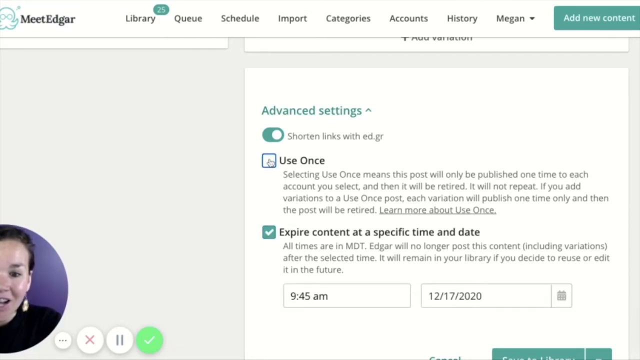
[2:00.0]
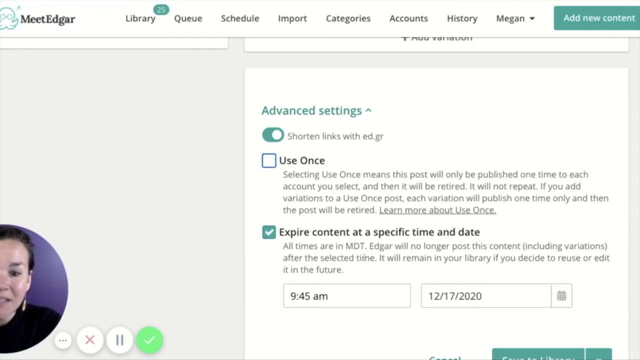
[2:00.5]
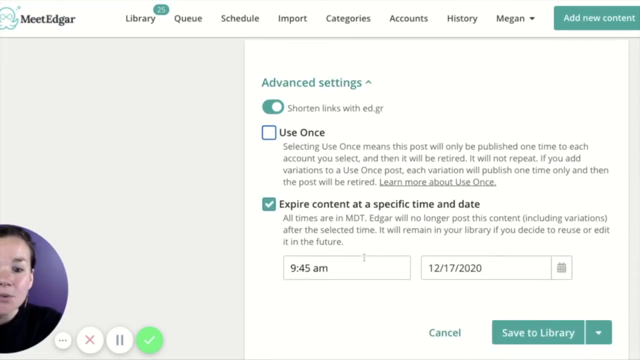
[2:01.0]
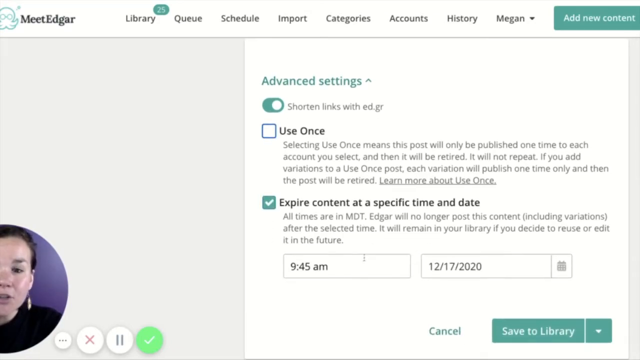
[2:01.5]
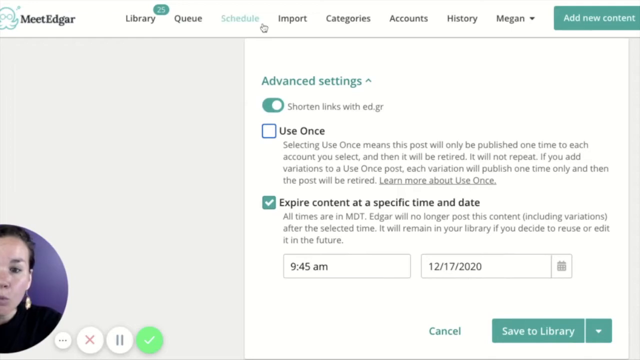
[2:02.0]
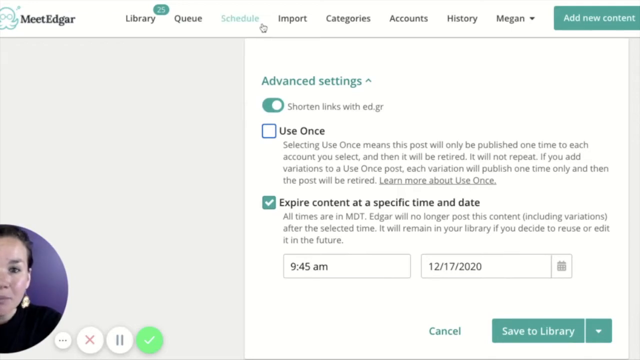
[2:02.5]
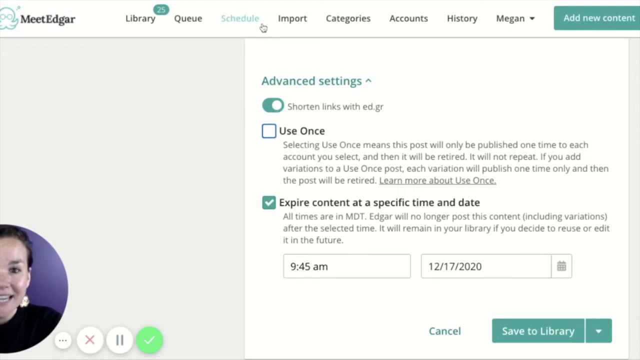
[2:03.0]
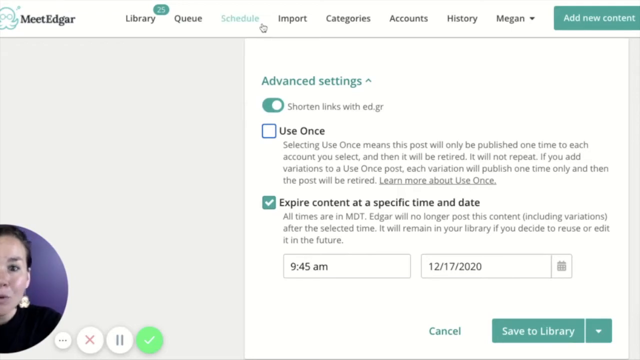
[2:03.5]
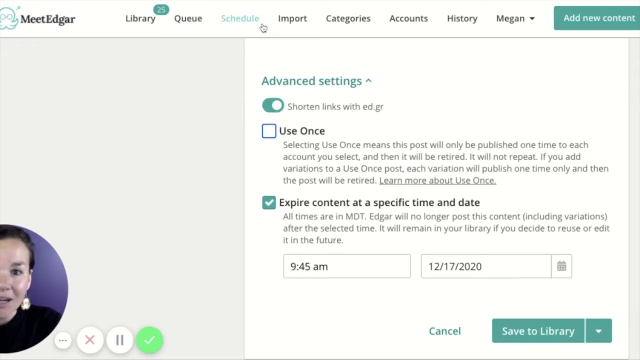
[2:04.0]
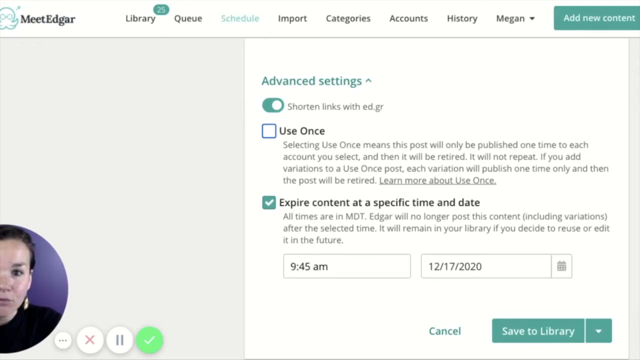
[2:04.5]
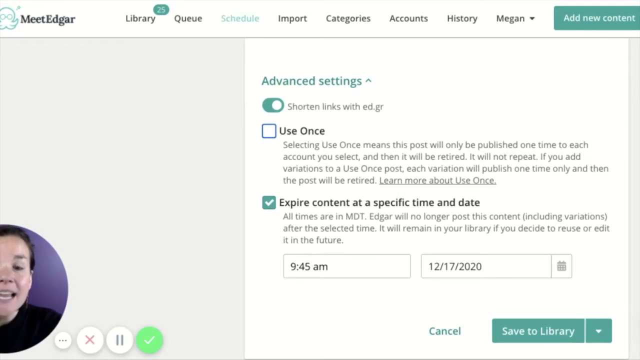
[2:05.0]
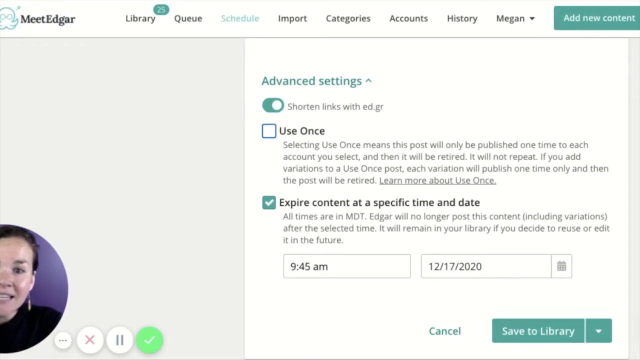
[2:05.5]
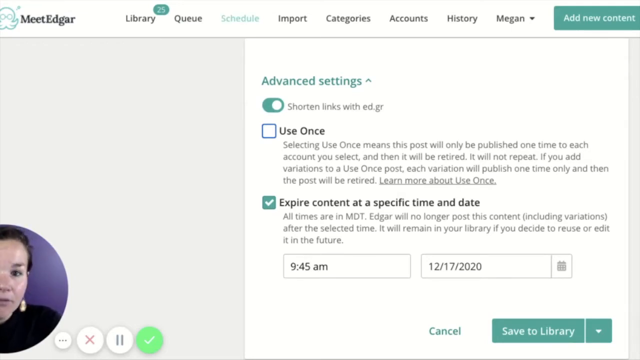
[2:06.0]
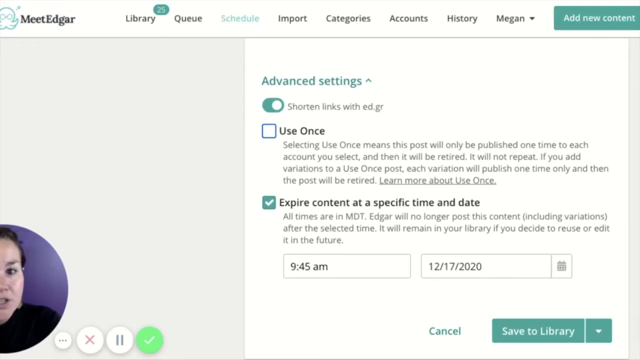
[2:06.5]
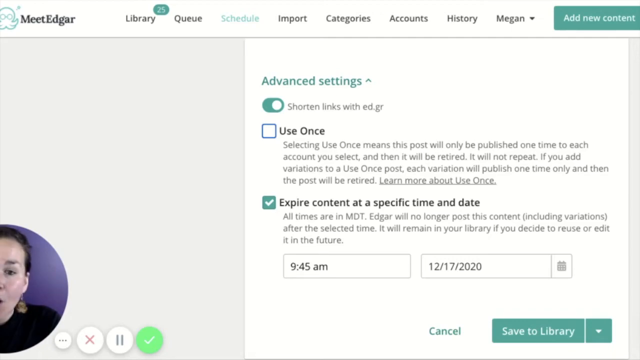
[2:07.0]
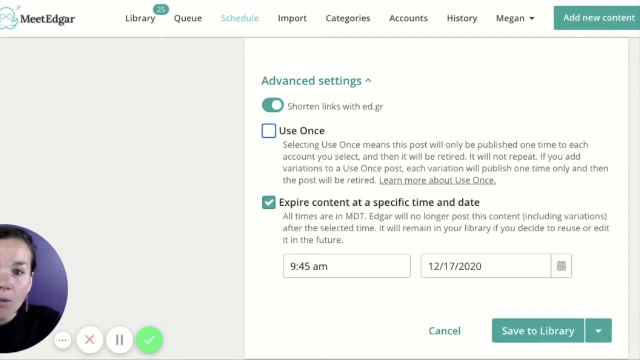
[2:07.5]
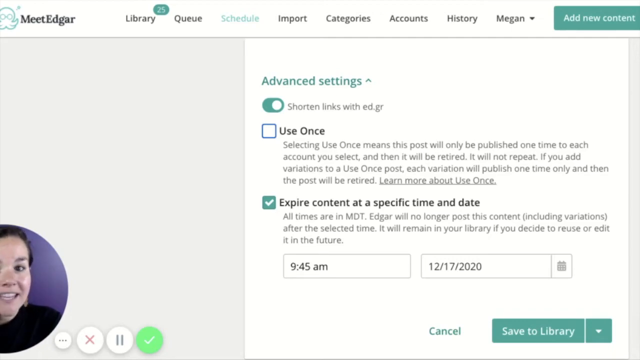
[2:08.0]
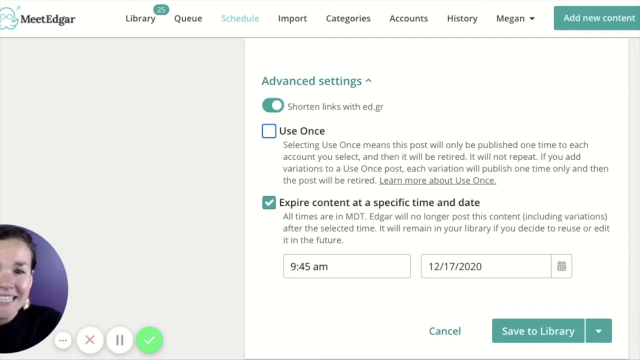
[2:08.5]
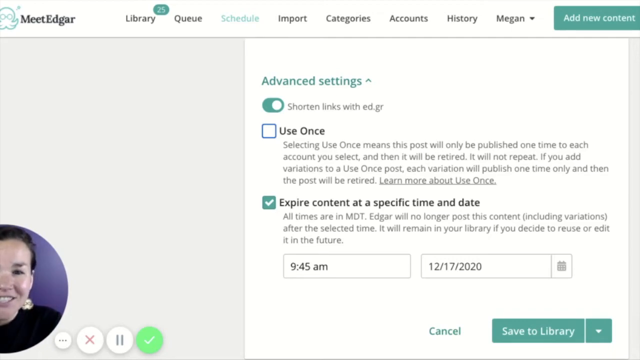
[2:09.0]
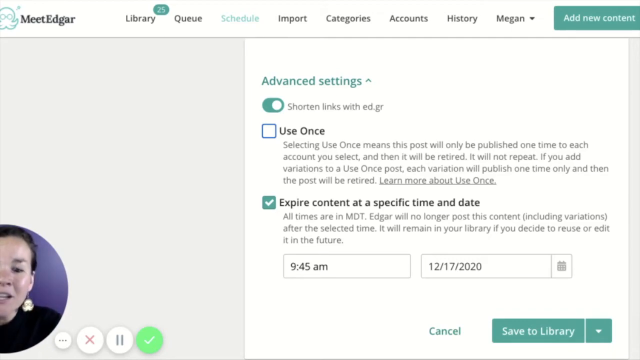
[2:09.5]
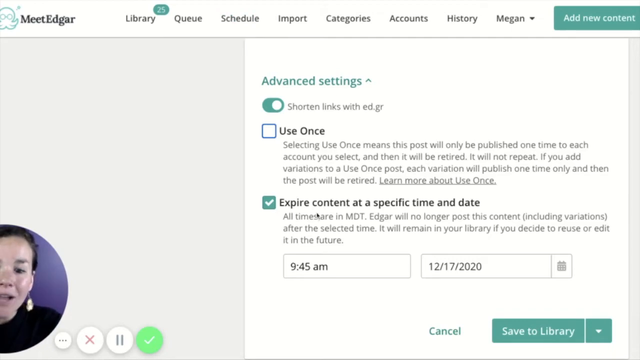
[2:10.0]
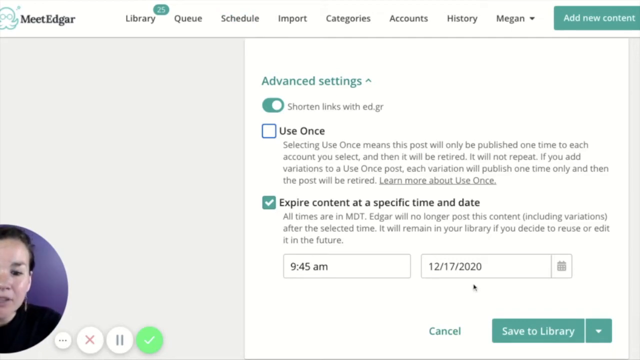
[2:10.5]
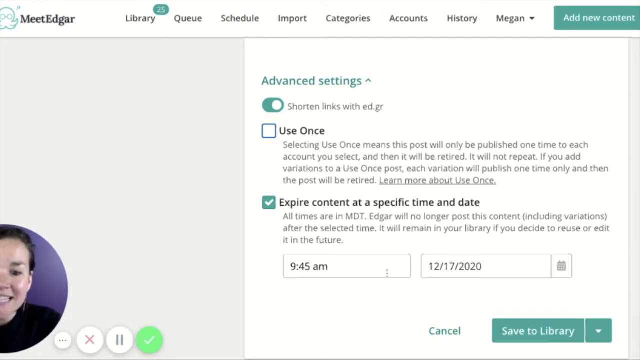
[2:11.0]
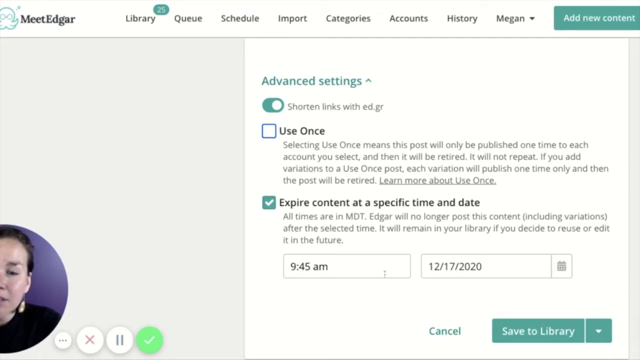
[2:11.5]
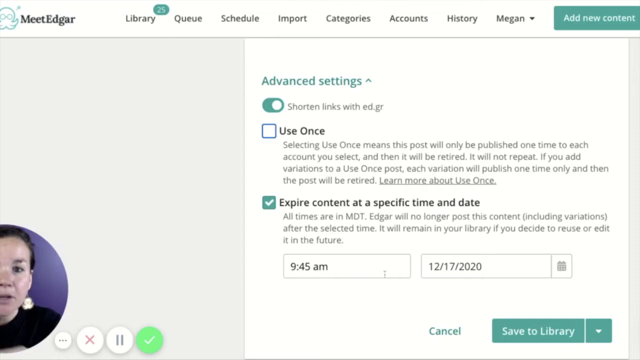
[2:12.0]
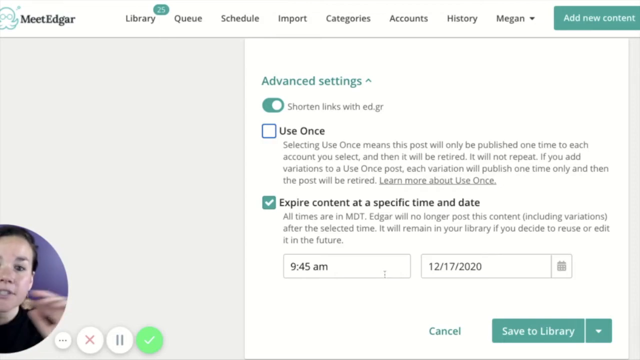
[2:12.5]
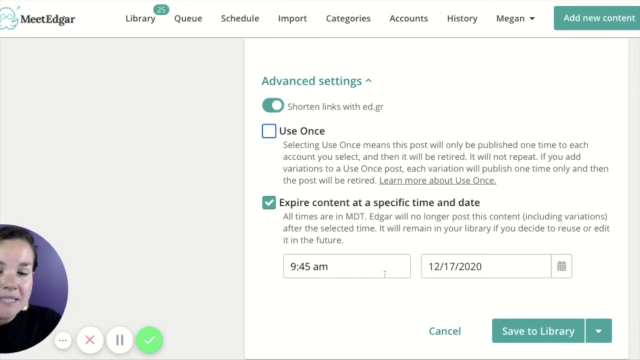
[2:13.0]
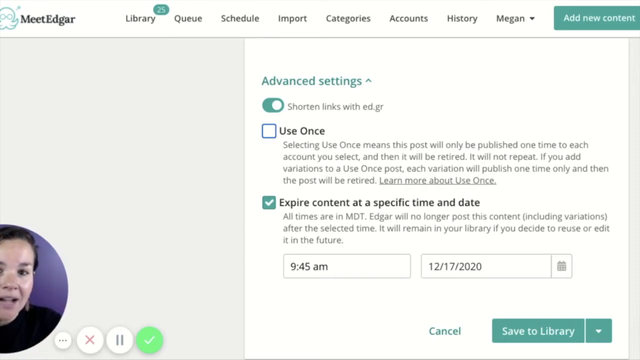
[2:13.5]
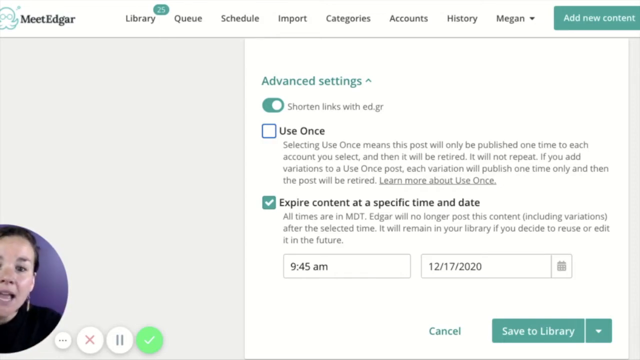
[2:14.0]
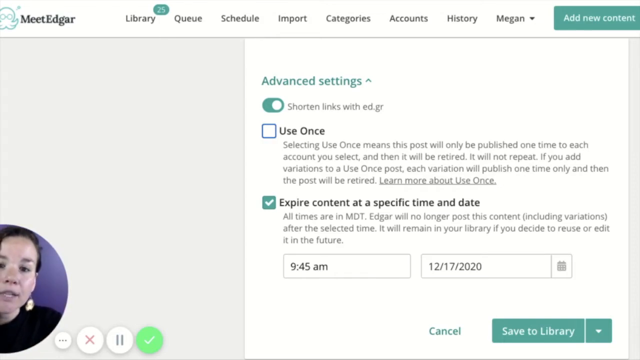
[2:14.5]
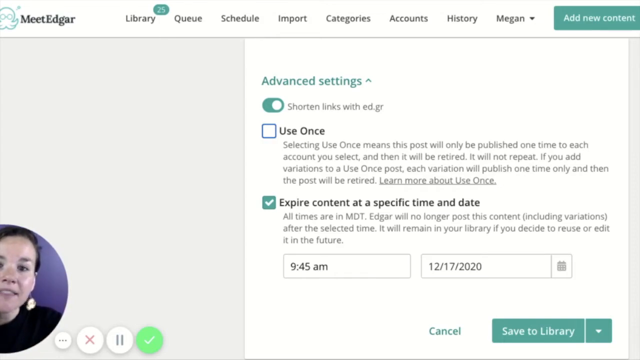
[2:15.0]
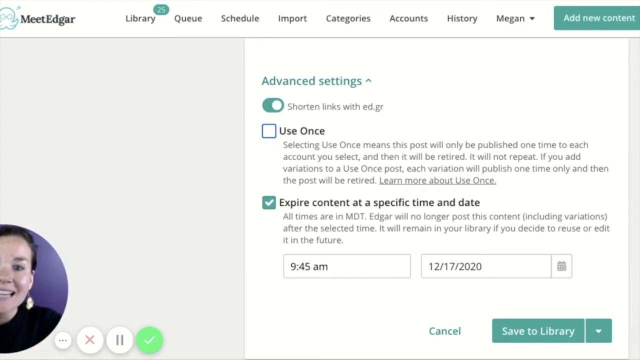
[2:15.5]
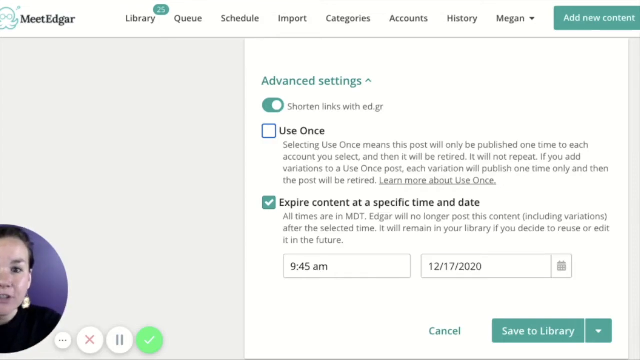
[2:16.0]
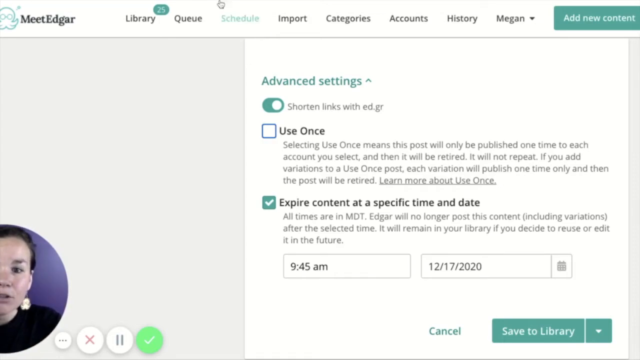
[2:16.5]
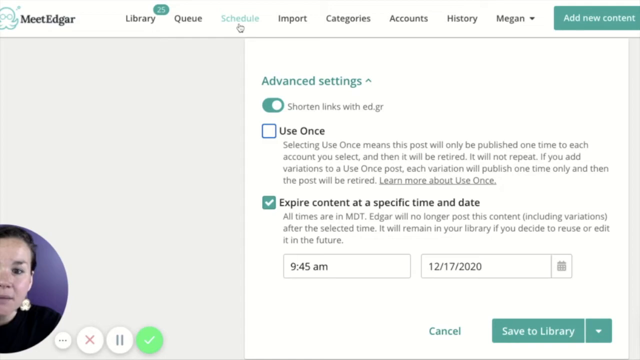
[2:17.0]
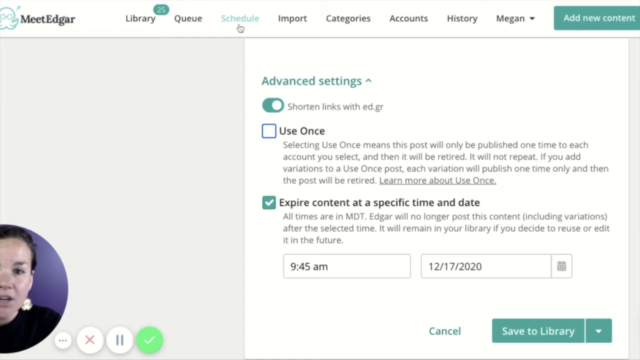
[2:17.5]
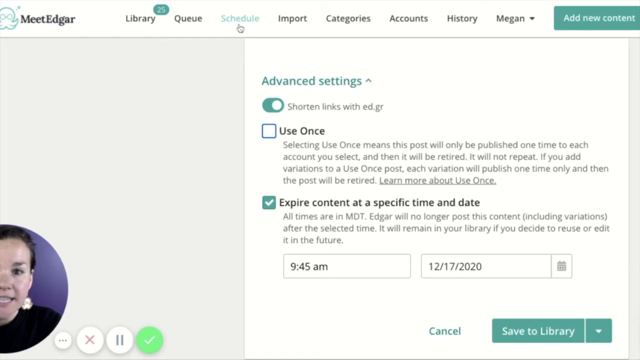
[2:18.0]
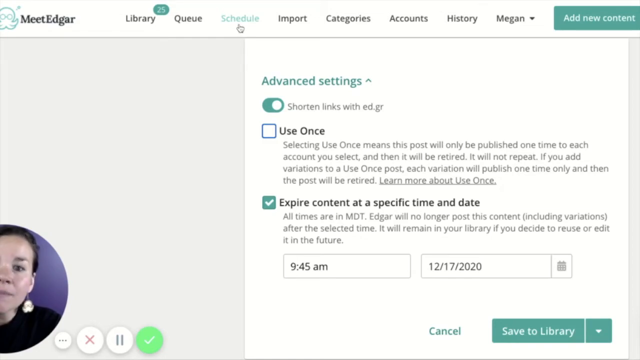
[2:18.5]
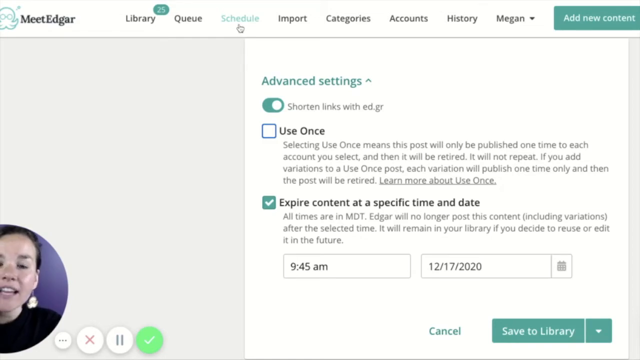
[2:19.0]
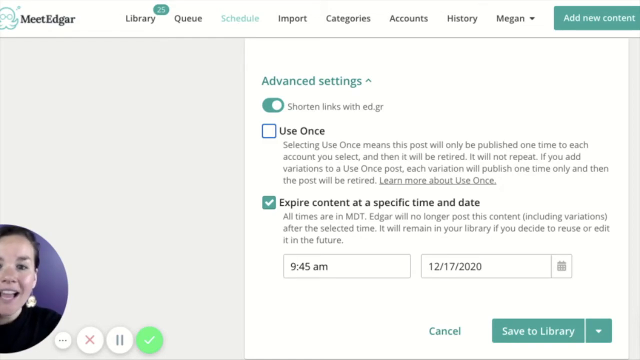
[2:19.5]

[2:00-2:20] The dark-haired woman continues with the advanced settings section of the platform. Below it is an enabled button for "shorten links with ed.gr." She unchecks the "Use Once" checkbox and leaves the other one as it is. She moves her cursor to the top of the page, then back down to move it between the time and date sections. In the top left corner of the screen are an animated icon and the text "MeetEdgar."